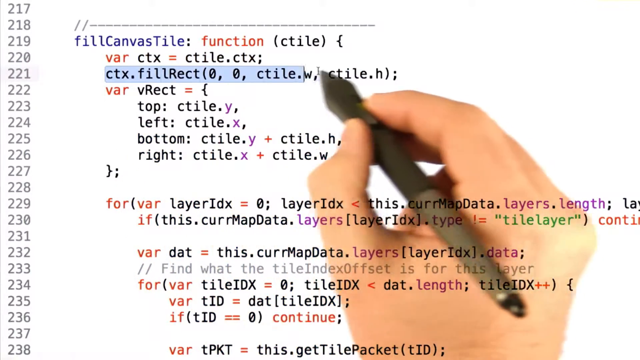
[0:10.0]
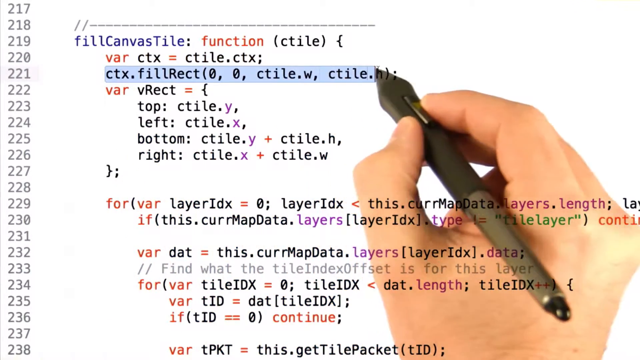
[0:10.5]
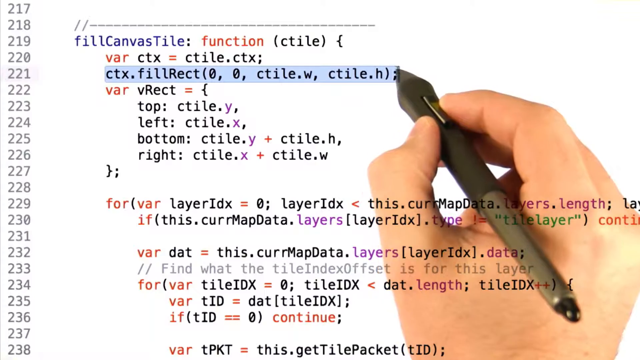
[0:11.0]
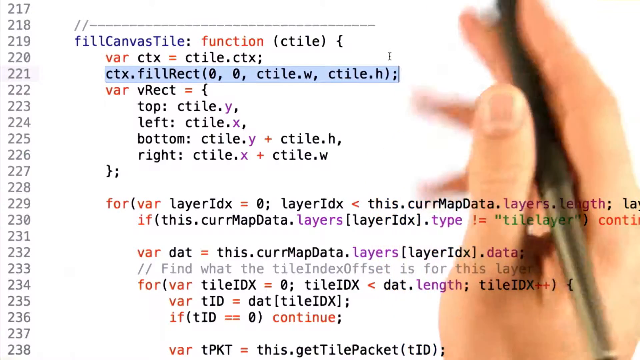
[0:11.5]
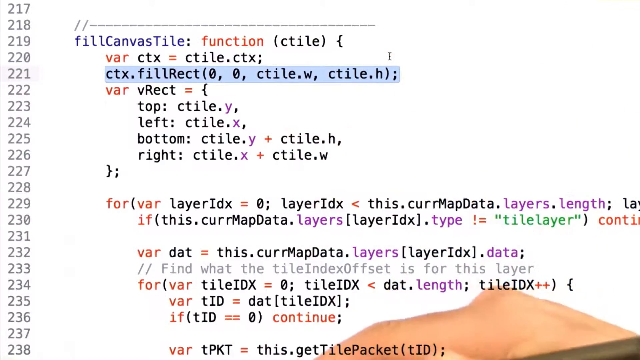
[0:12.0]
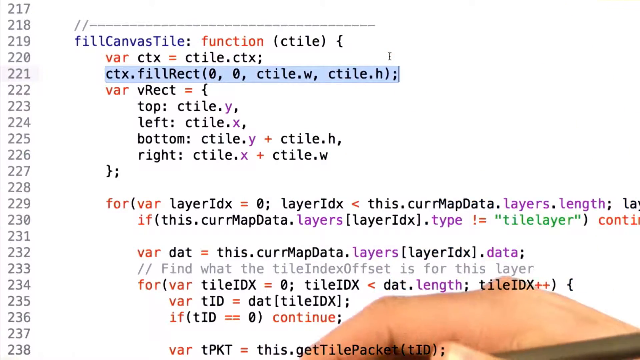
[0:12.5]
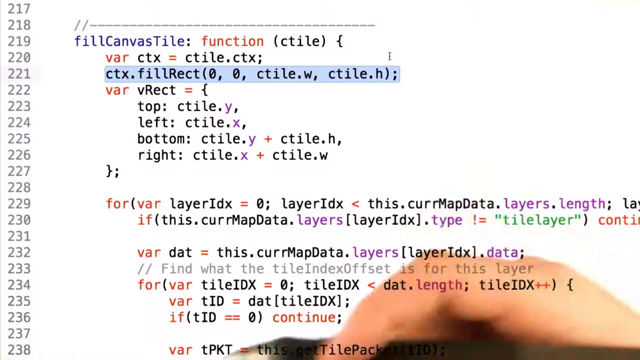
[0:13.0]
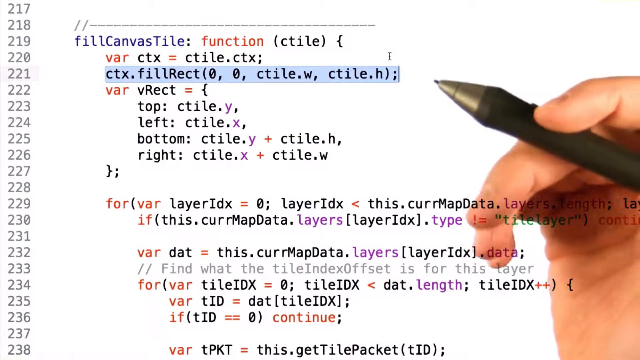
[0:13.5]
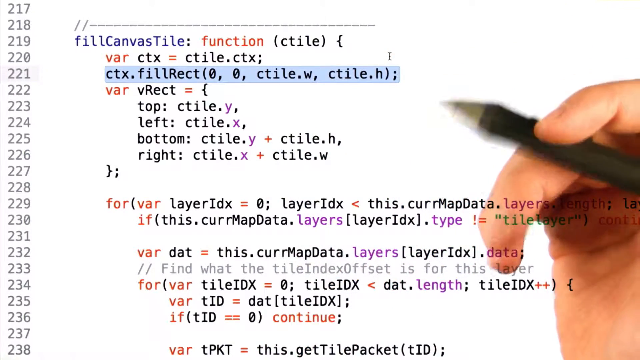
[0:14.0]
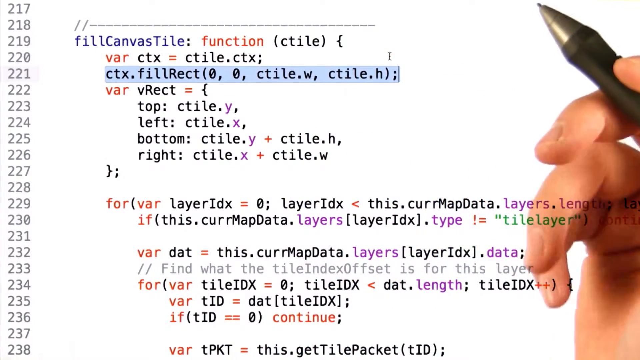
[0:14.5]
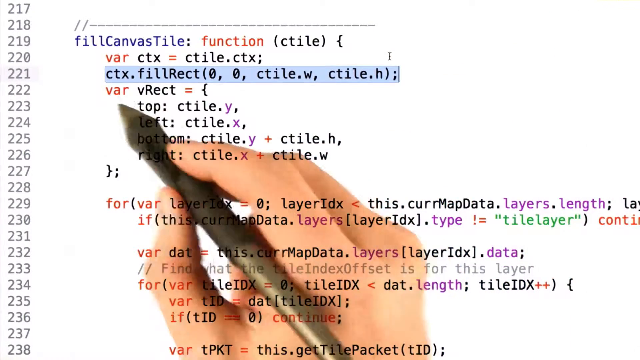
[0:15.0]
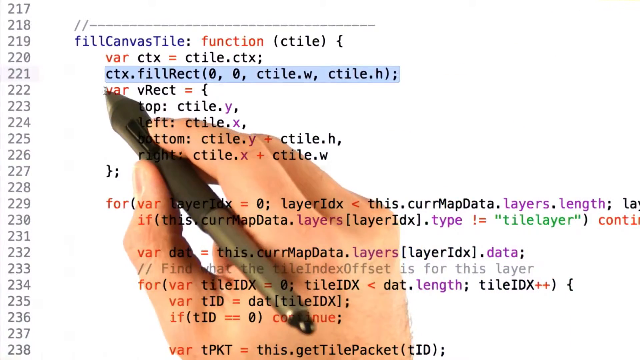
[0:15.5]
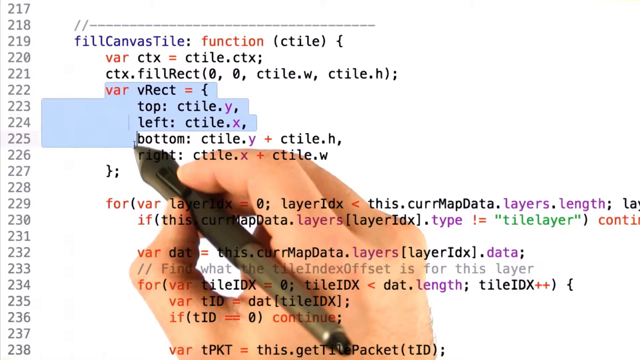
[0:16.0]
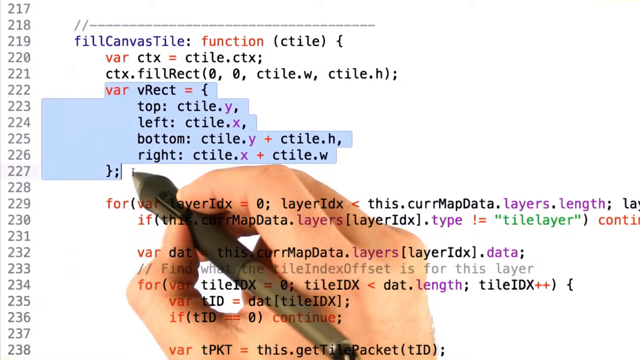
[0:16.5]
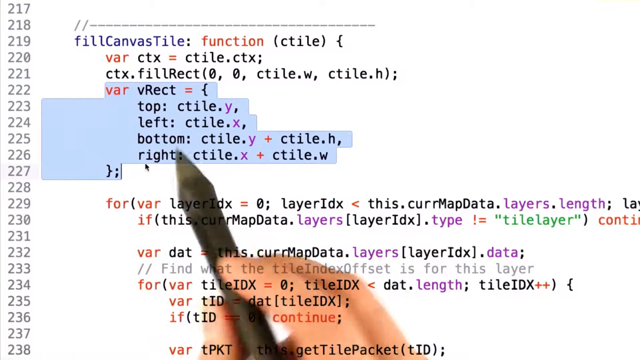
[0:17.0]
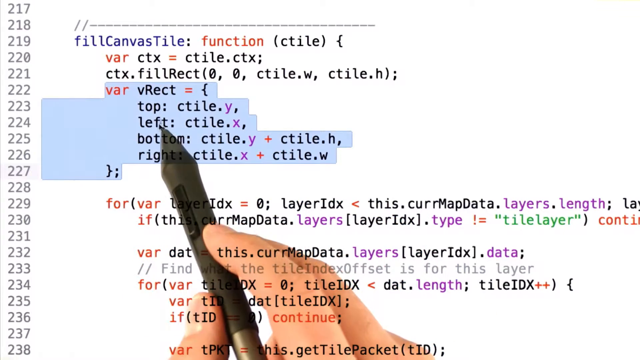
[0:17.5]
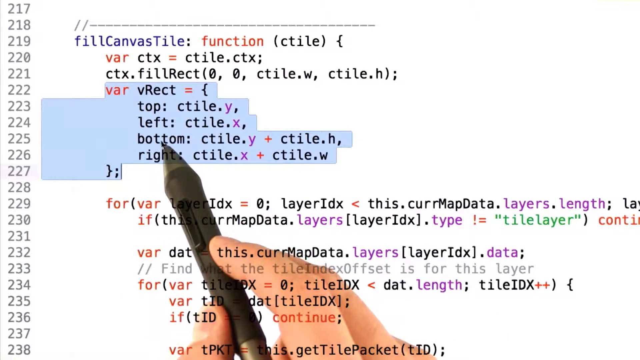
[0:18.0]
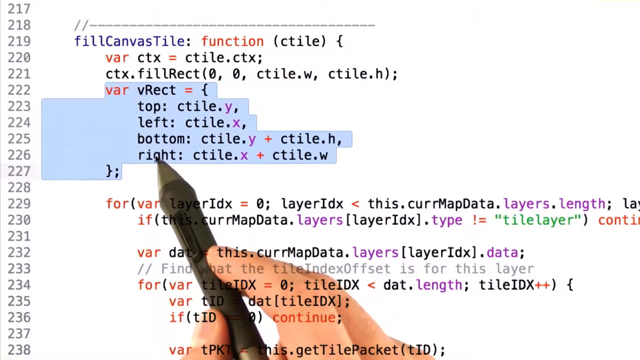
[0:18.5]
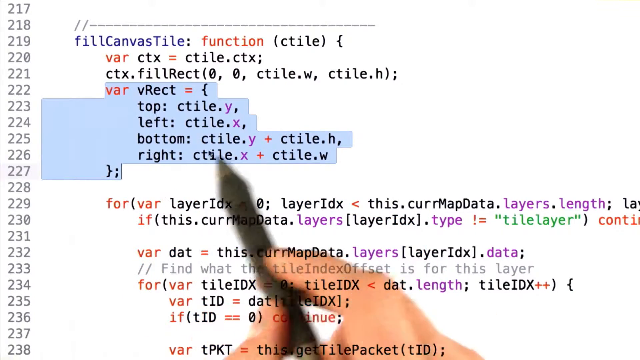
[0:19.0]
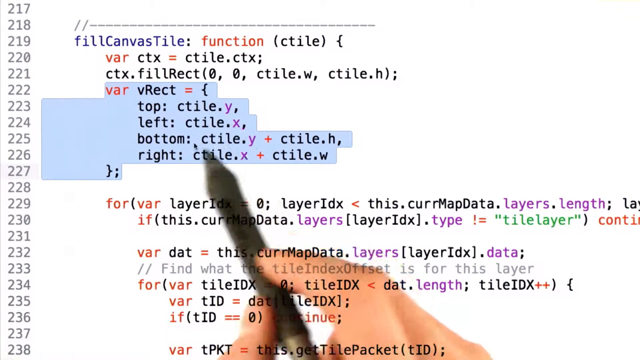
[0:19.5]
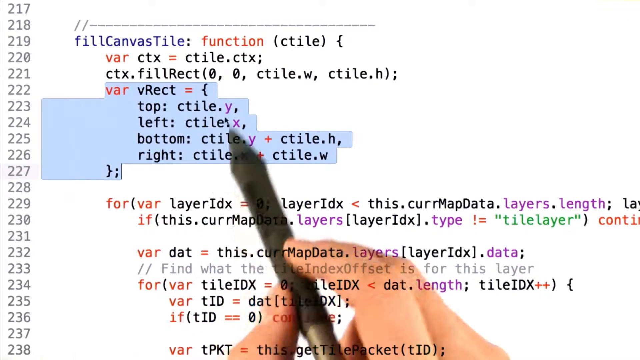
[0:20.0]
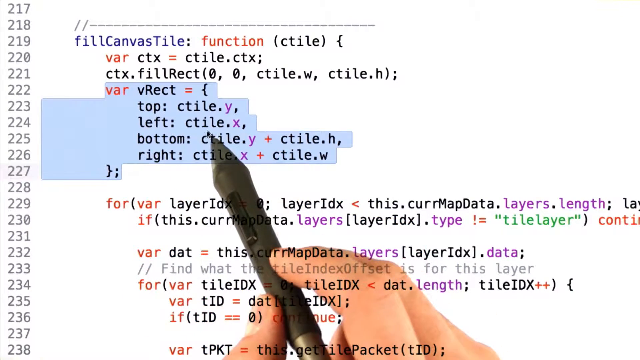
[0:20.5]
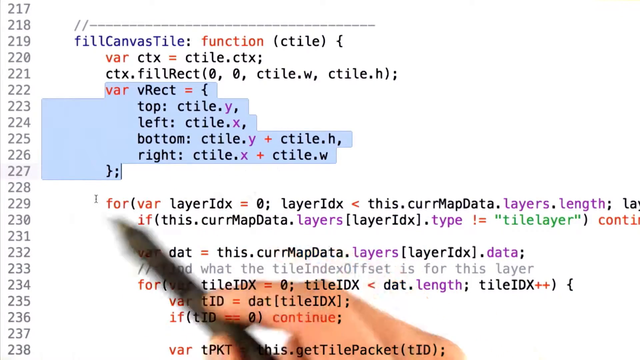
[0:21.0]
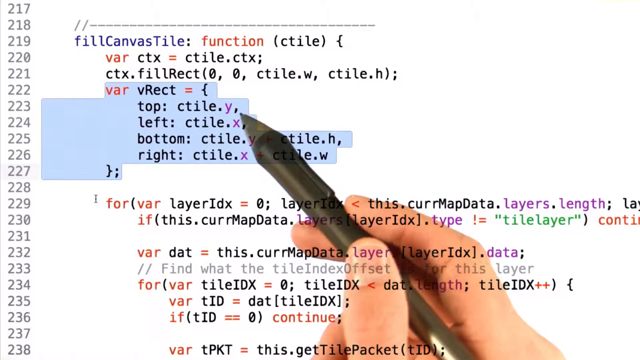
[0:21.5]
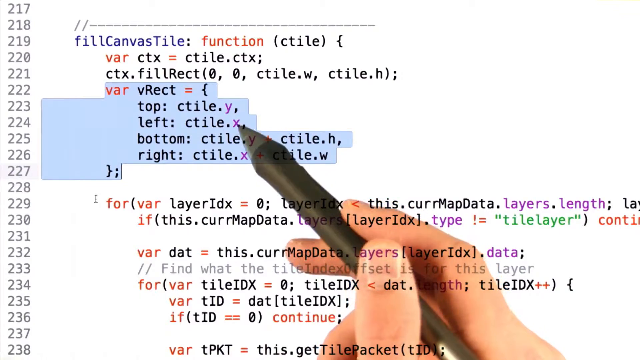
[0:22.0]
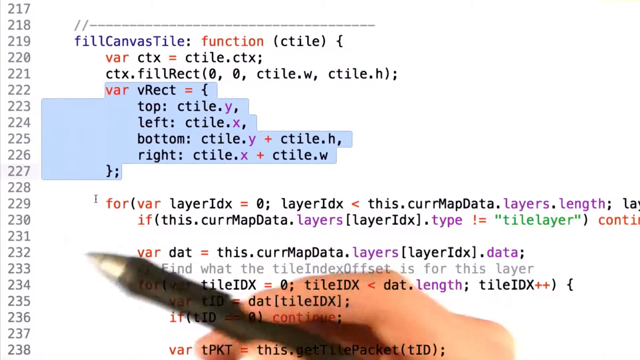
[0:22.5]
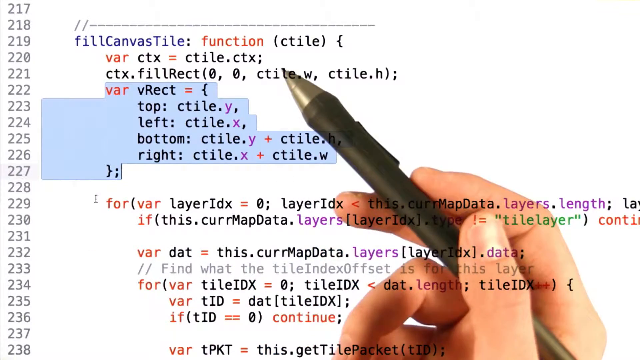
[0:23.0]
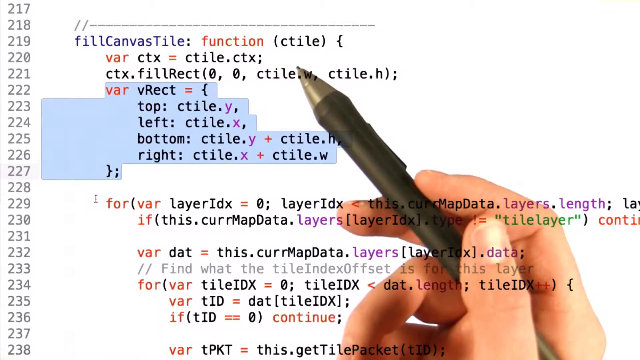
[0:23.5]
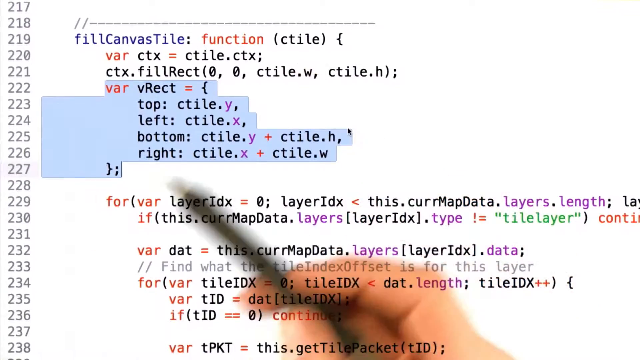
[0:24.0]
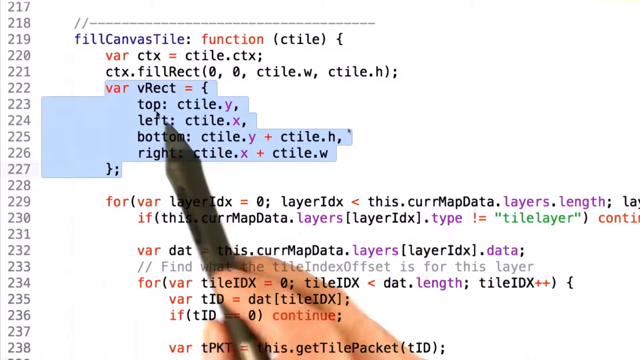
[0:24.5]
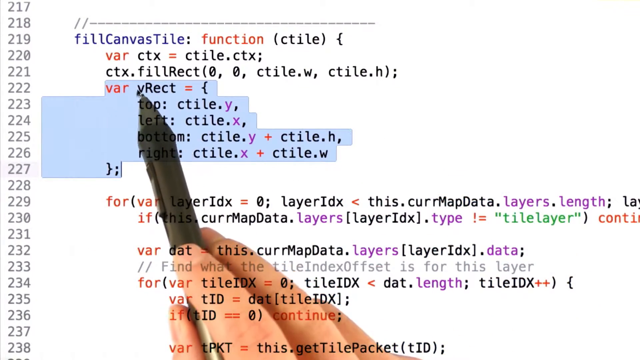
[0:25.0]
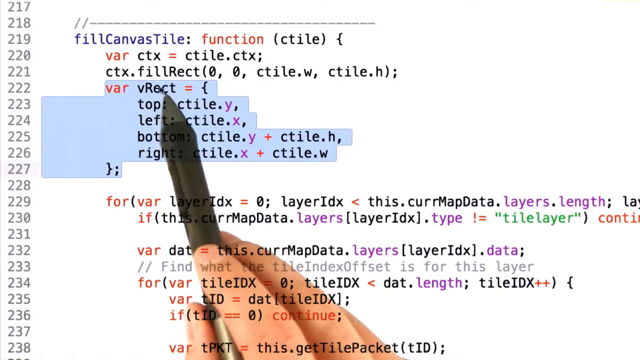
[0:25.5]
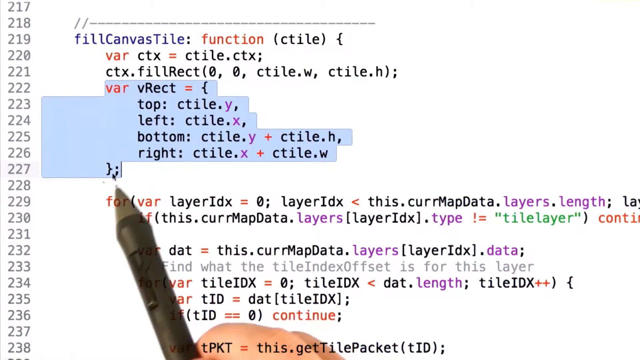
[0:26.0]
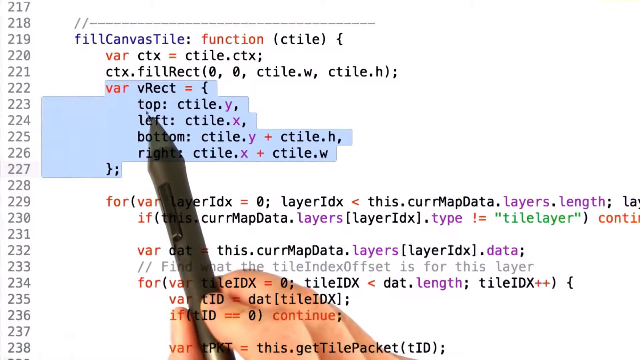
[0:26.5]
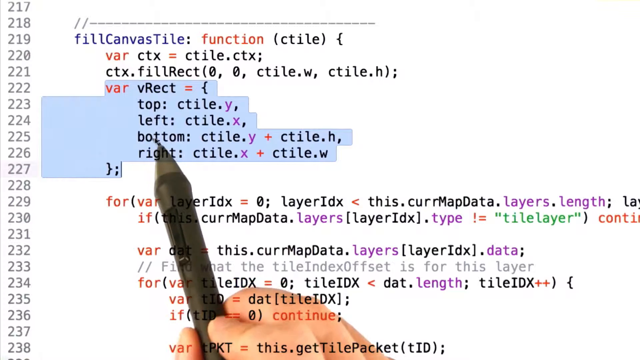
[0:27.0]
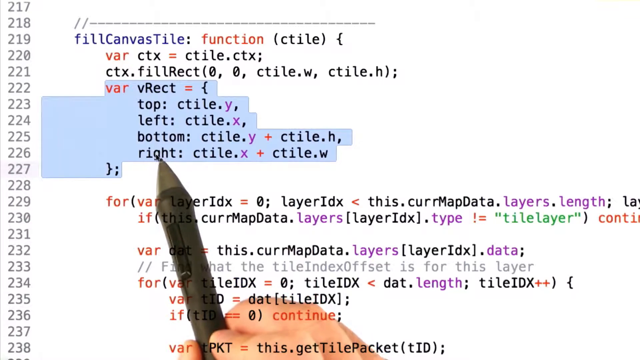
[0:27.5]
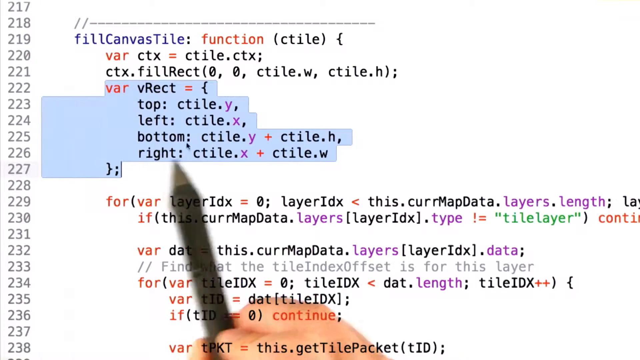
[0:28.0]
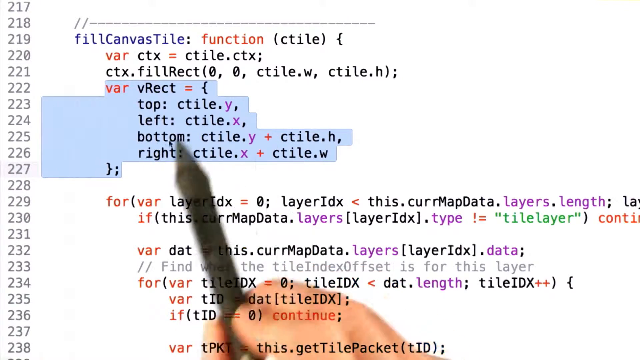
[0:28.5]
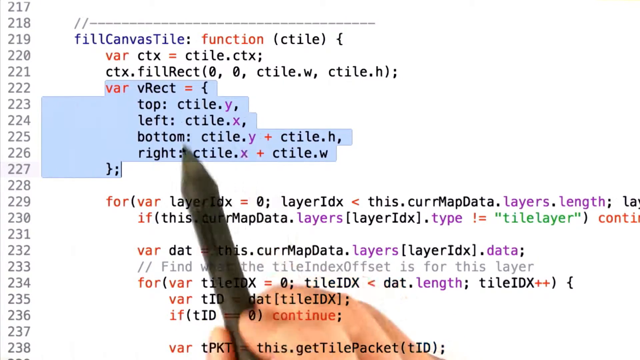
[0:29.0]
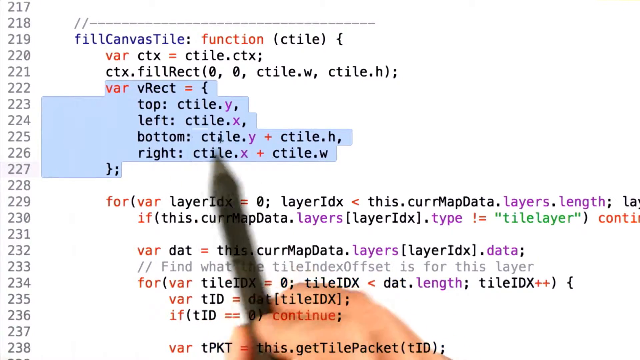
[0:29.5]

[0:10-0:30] The same hand with the highlighting pen continues, apparently highlighting a little more this time. It directs attention to what looks like the blue-highlighted text "rect", "top left" and "bottom right". The highlight then moves to line 221 of the code, where it highlights "CTX fill", and next it highlights lines 222 to 227, pointing toward particular code. The text is multicolored, in purple, red and black, and some of it is in green; the colors apparently include green, red and blue, making it very colorful. The highlighter pen is black and looks like a regular pen, but it is apparently an on-screen highlighting pen for a tablet or laptop. It keeps highlighting the code.